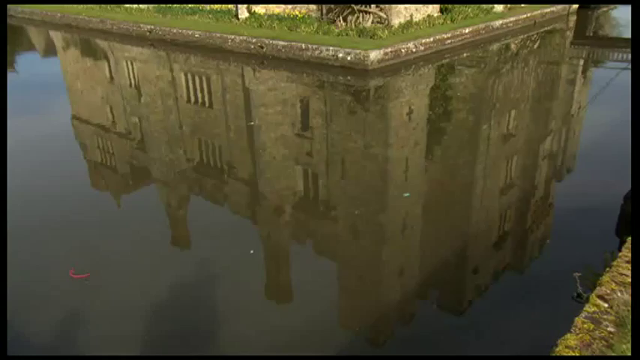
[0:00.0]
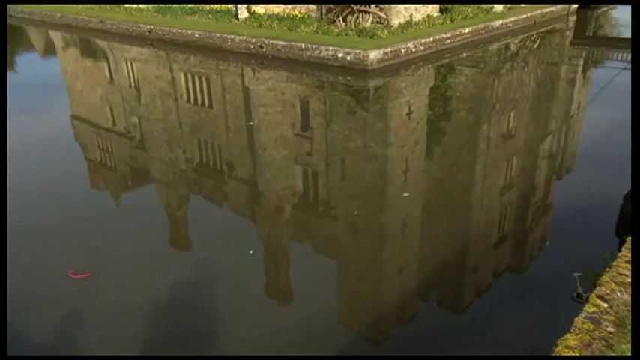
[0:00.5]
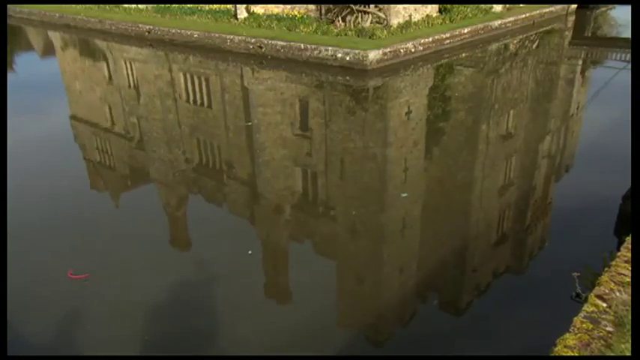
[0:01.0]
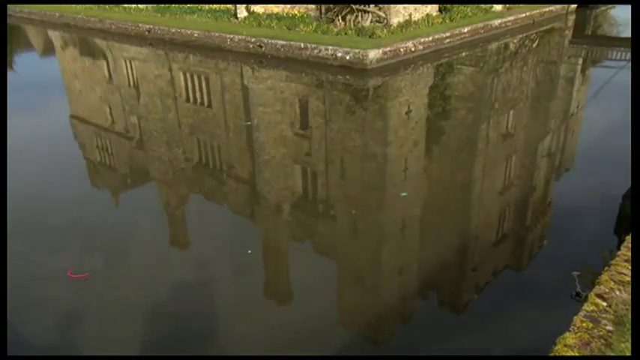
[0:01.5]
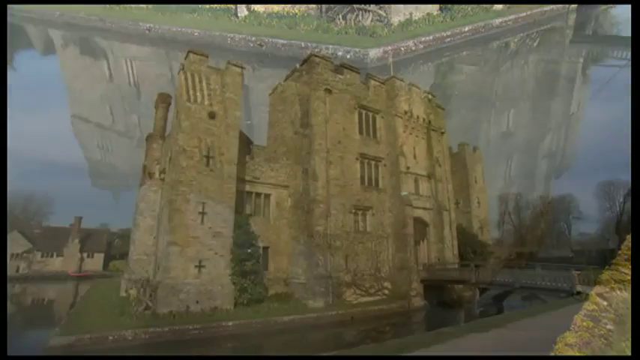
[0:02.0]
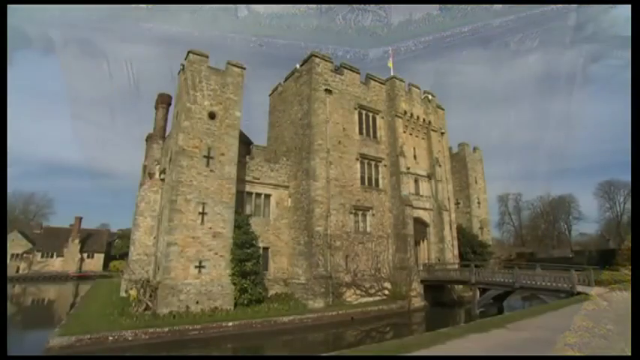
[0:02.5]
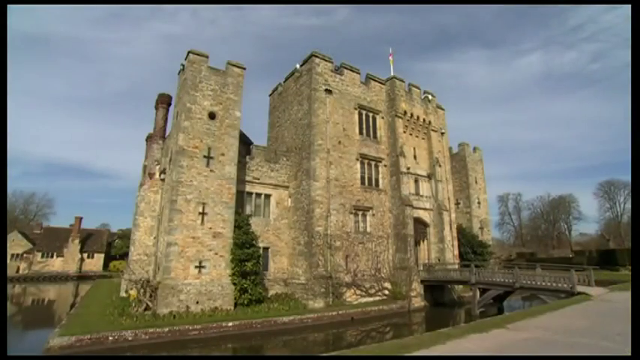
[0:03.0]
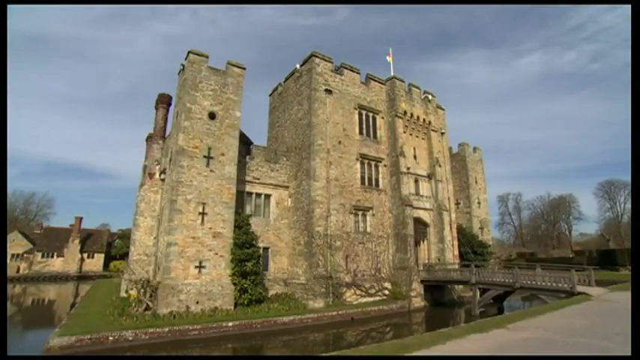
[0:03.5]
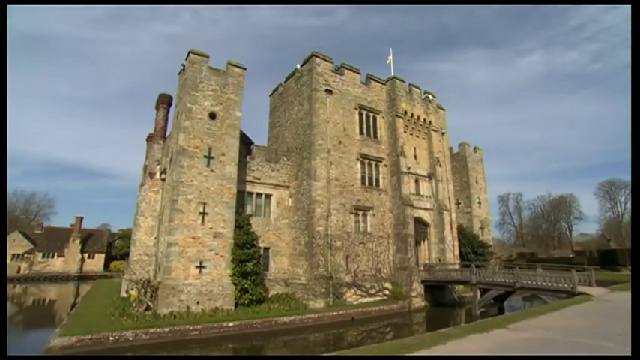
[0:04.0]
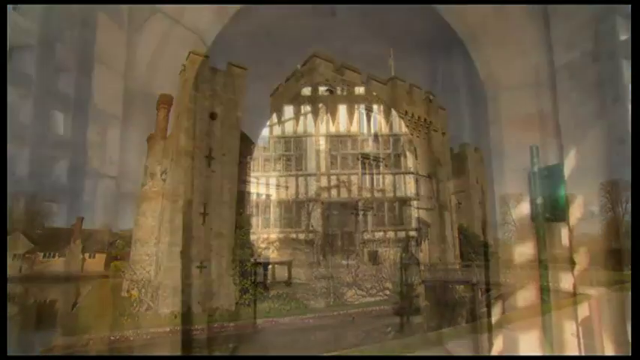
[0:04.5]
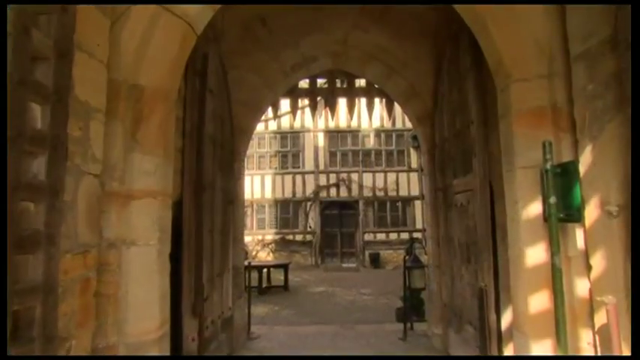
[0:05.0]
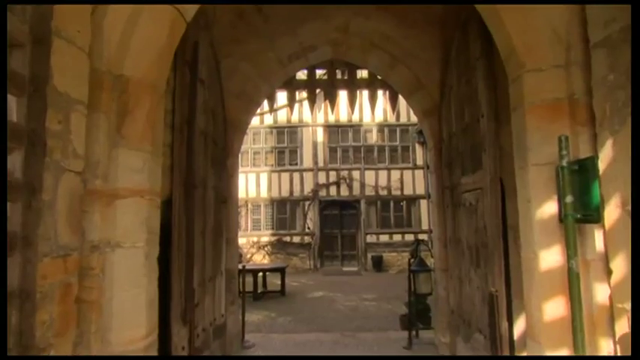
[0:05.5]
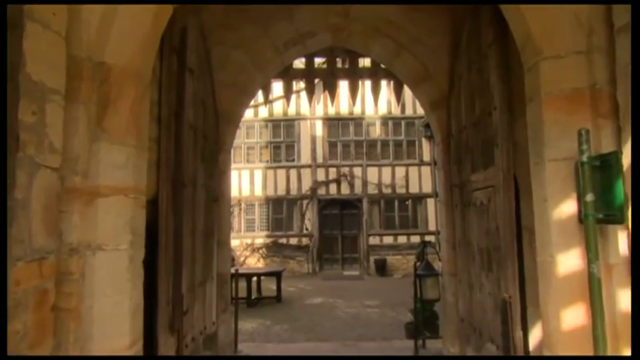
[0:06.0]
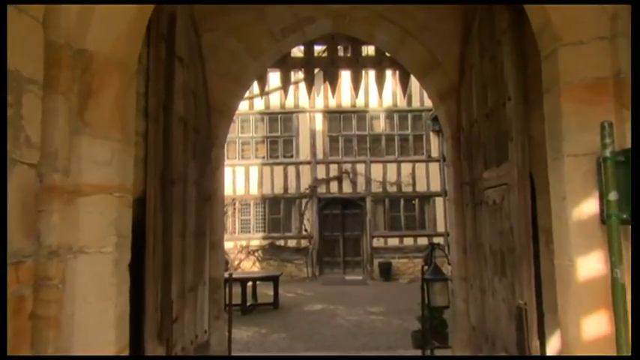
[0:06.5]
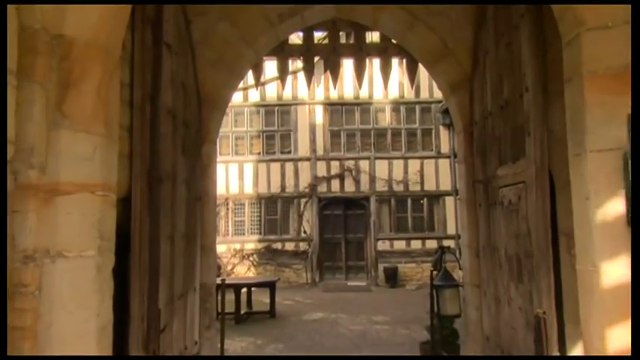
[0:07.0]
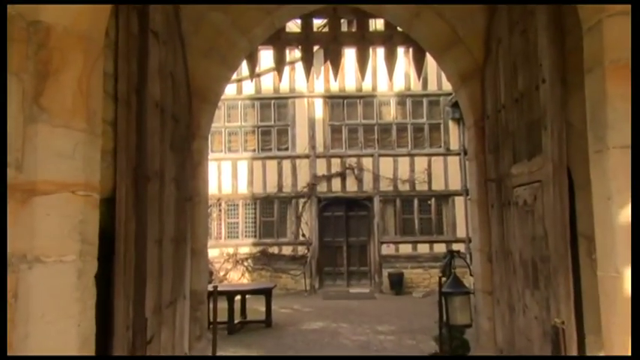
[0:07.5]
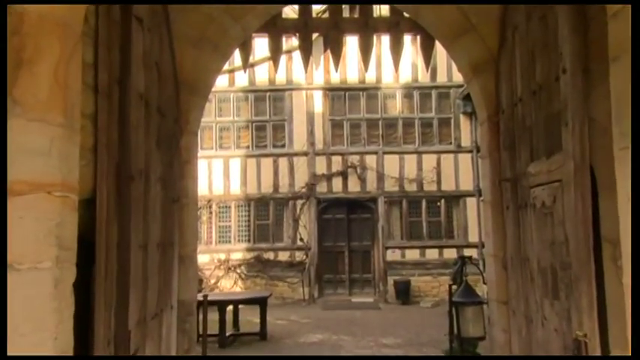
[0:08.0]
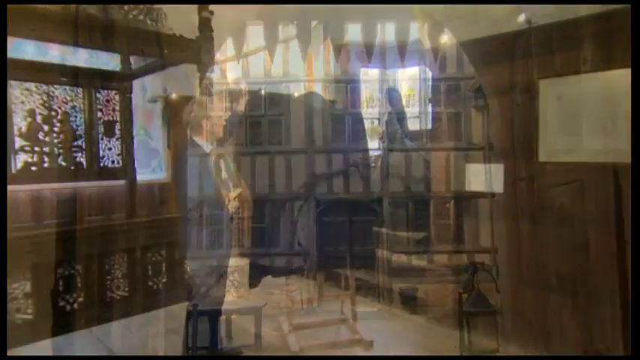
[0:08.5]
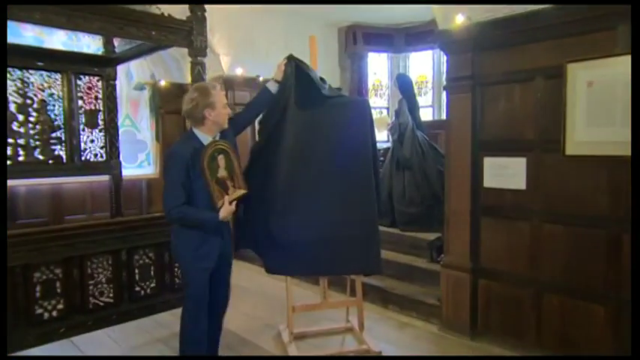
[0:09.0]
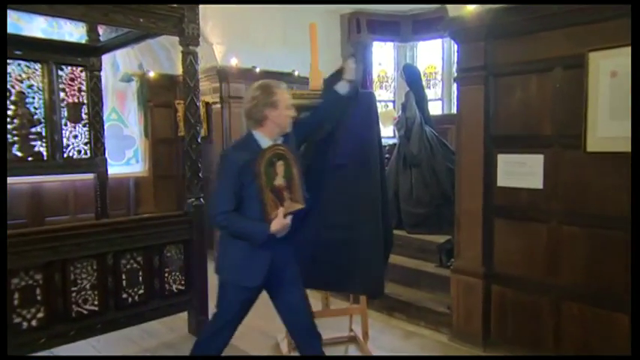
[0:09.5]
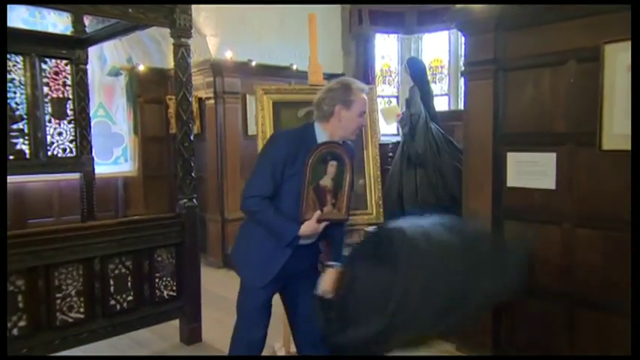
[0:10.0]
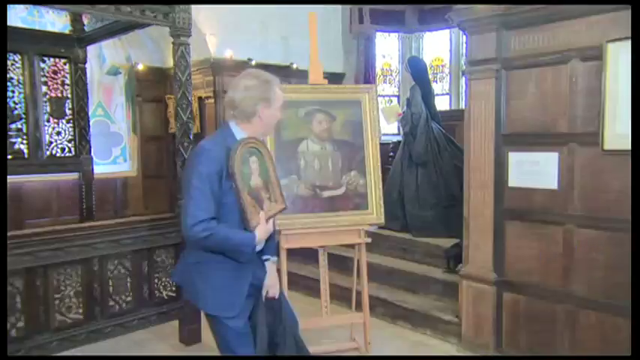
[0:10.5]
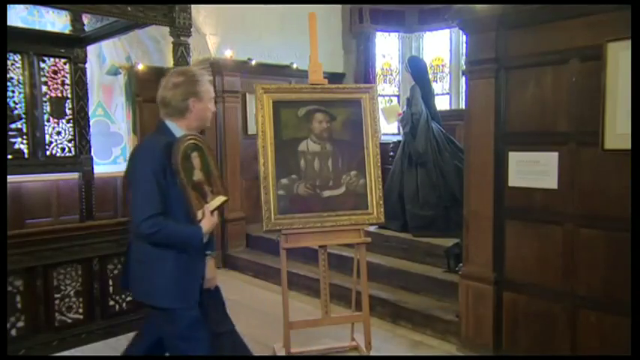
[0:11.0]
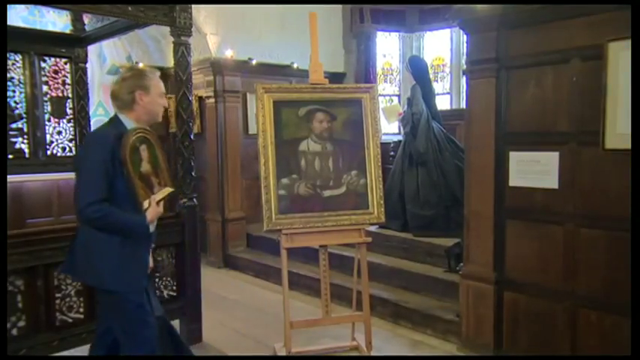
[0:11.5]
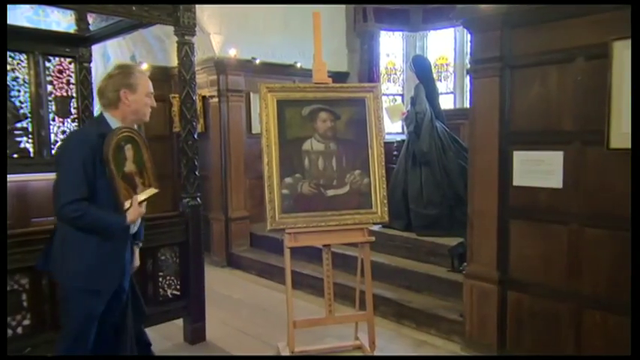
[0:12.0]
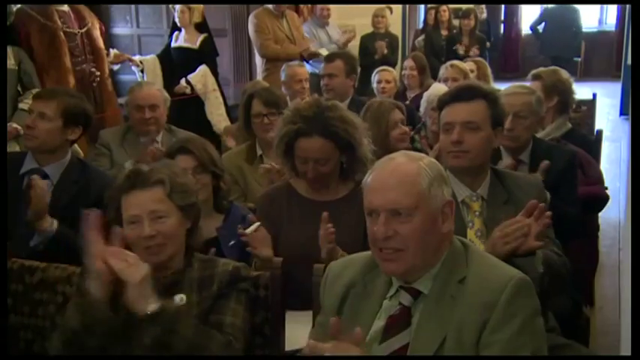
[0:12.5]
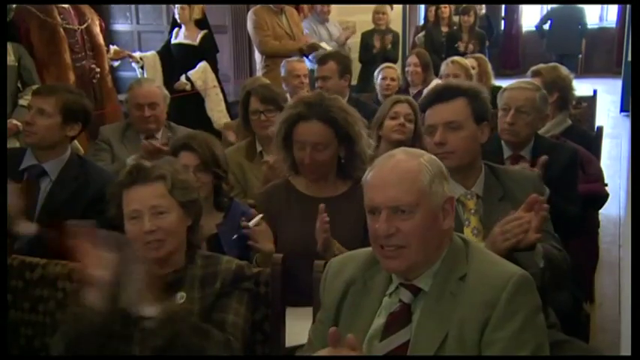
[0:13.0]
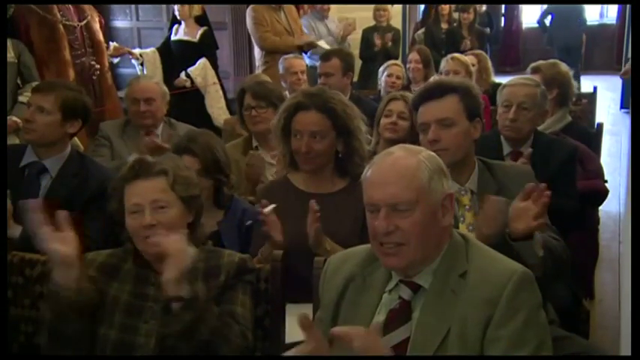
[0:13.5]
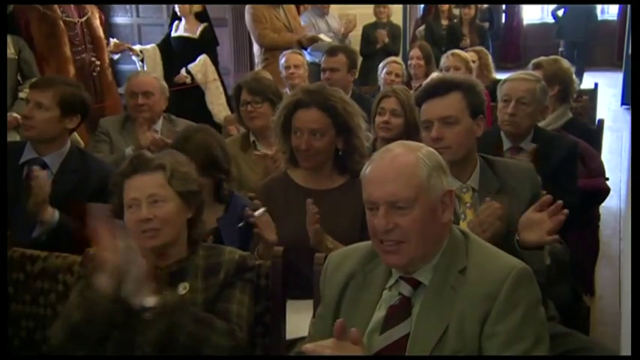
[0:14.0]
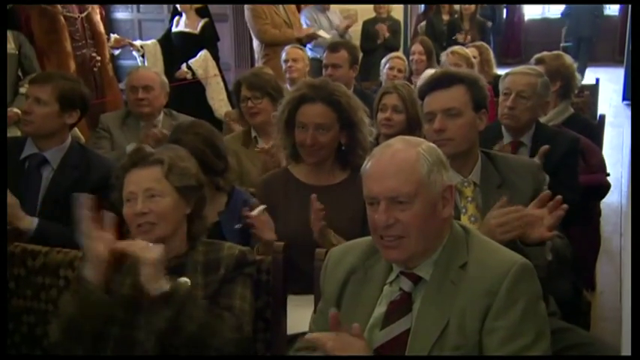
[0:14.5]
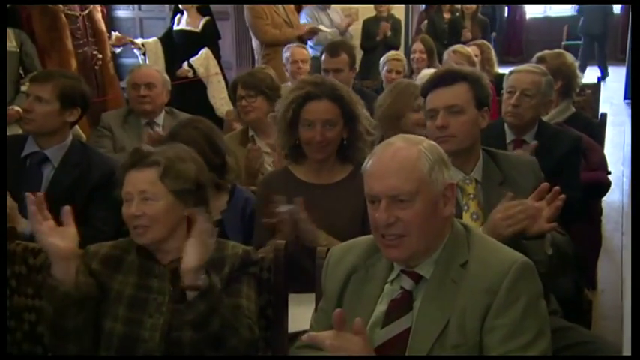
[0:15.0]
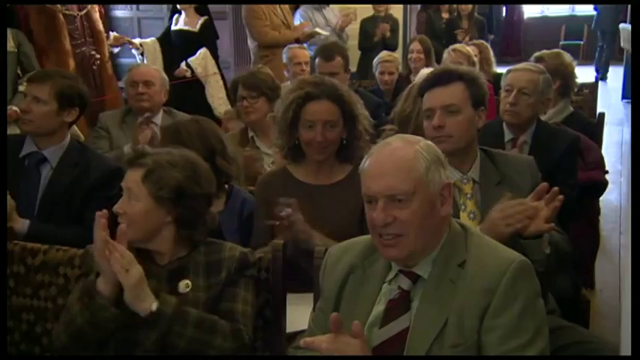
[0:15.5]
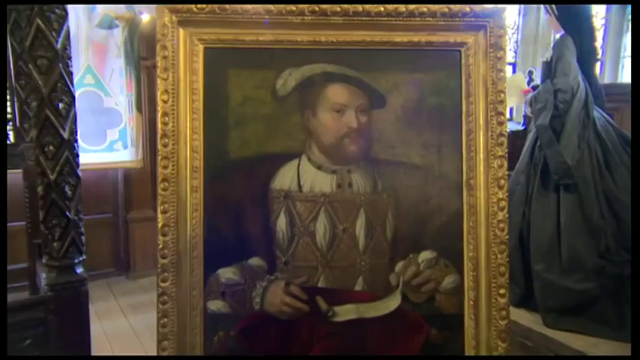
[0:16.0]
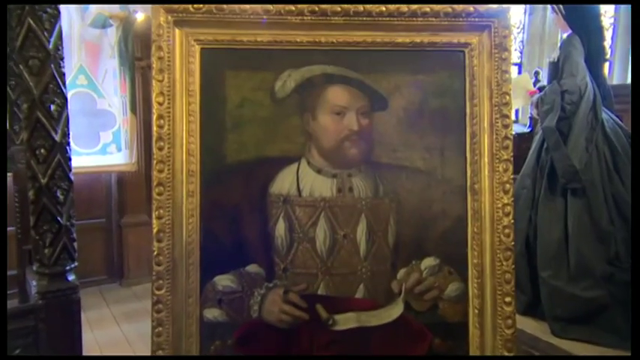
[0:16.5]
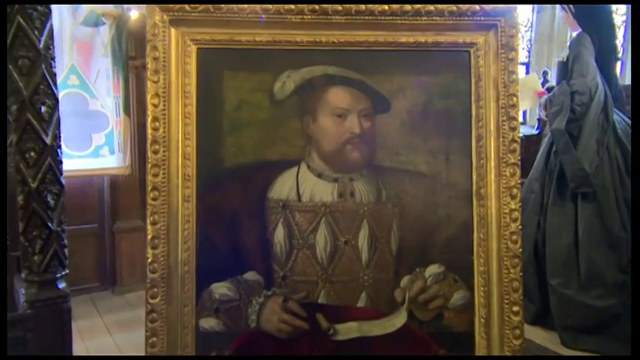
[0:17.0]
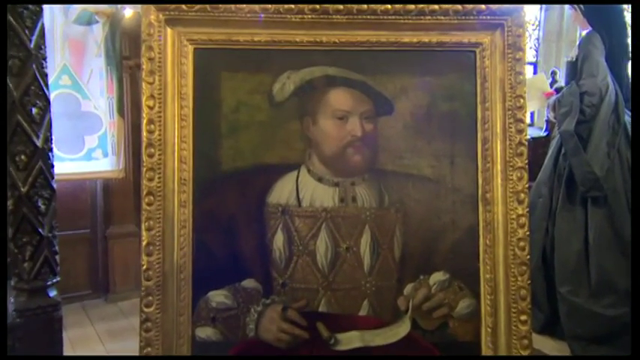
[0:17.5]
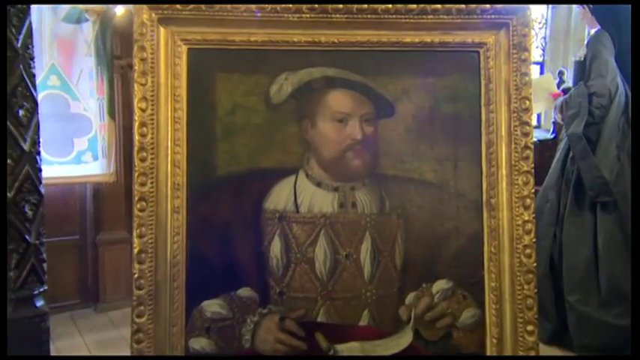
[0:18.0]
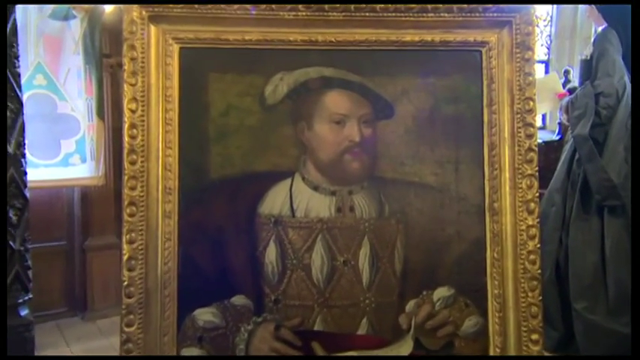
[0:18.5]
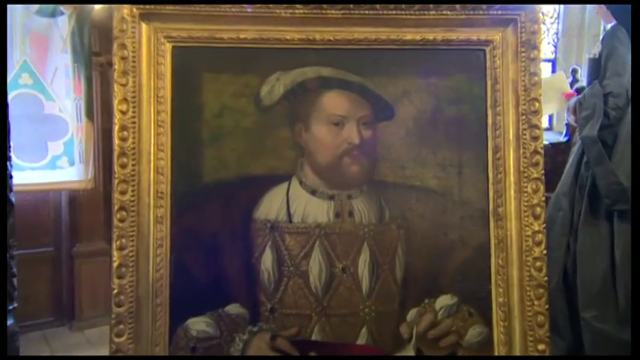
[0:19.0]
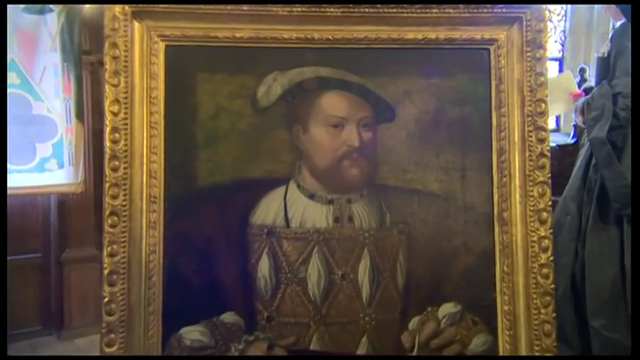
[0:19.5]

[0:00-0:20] A building that appears to be very old is shown, and a person shows pictures that seem to be of an emperor or a king; the pictures seem to be very old. The reflection of the building is clearly visible on the water.